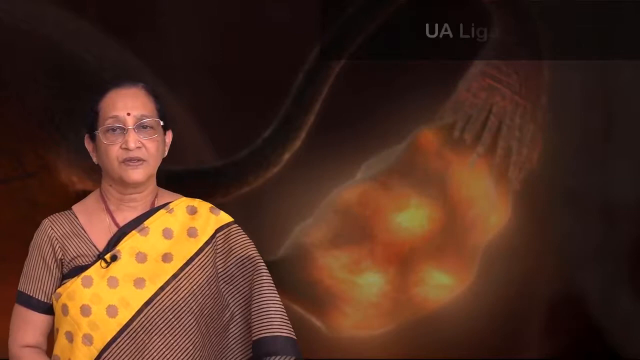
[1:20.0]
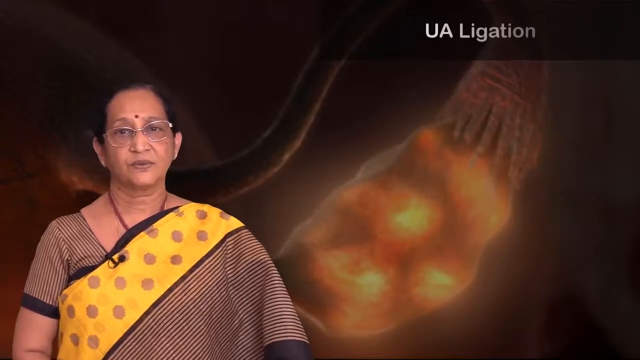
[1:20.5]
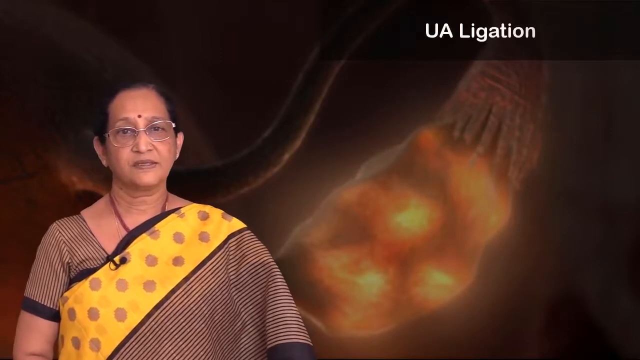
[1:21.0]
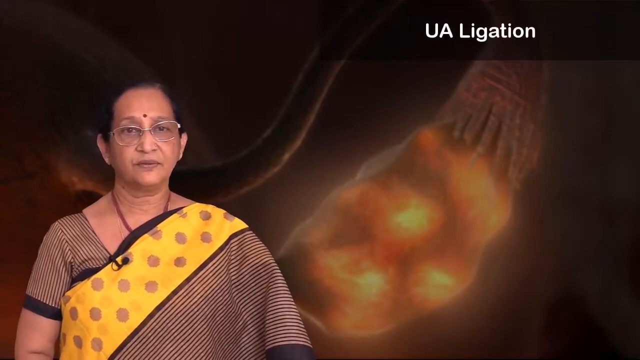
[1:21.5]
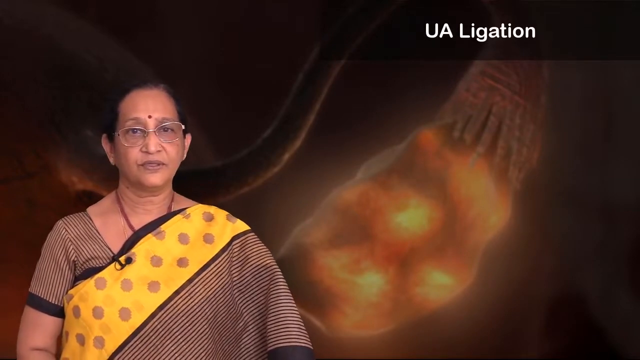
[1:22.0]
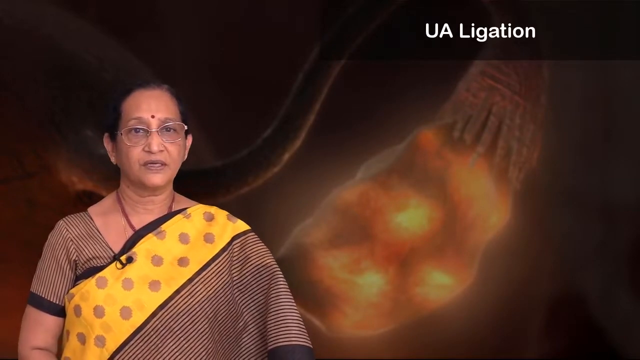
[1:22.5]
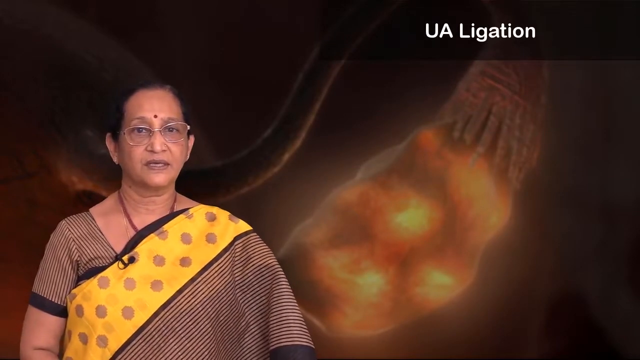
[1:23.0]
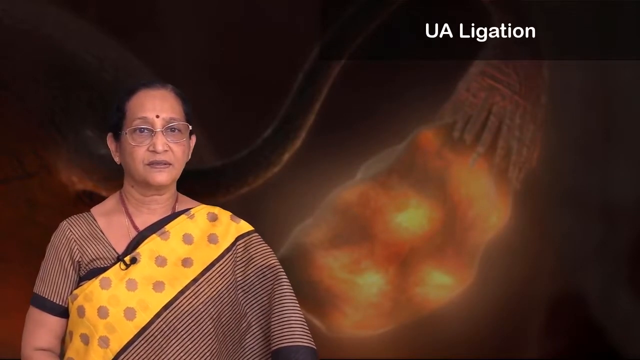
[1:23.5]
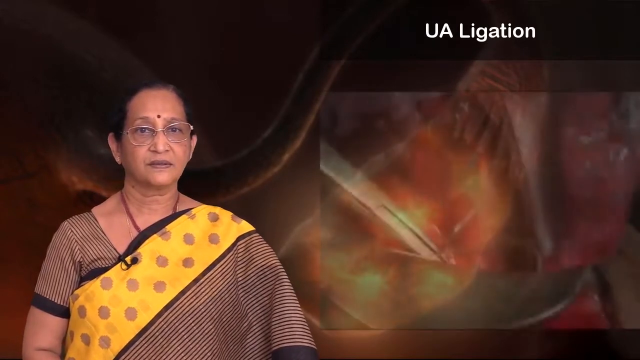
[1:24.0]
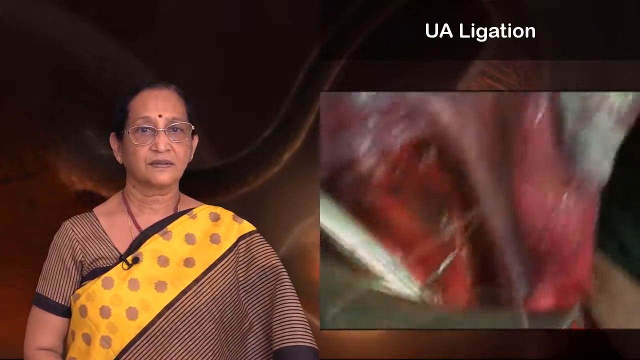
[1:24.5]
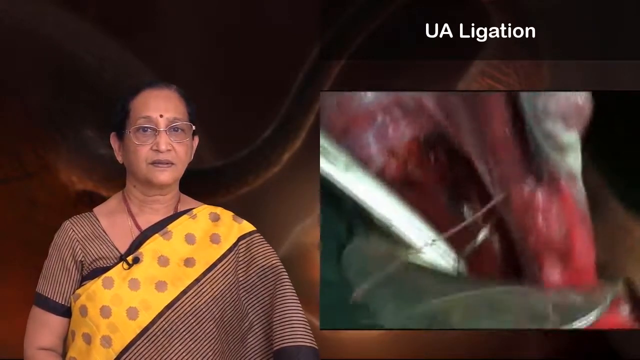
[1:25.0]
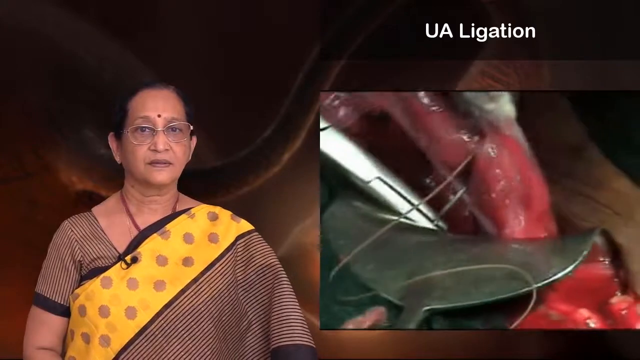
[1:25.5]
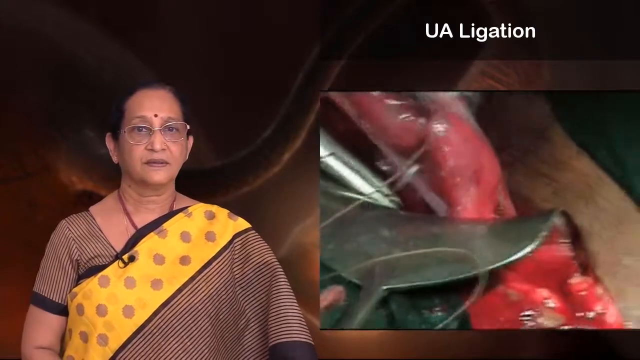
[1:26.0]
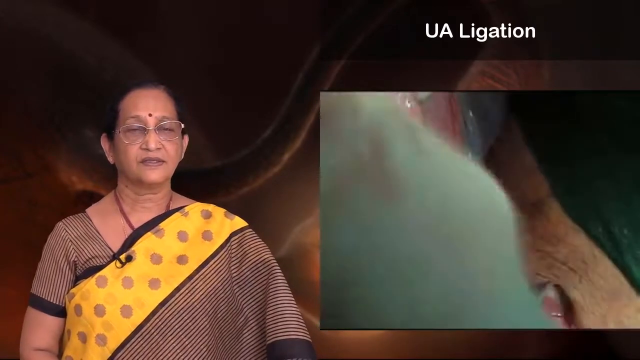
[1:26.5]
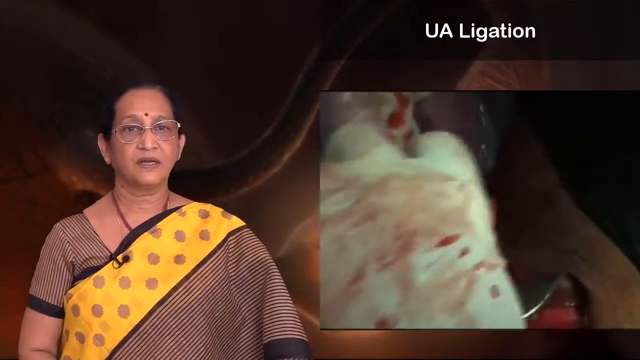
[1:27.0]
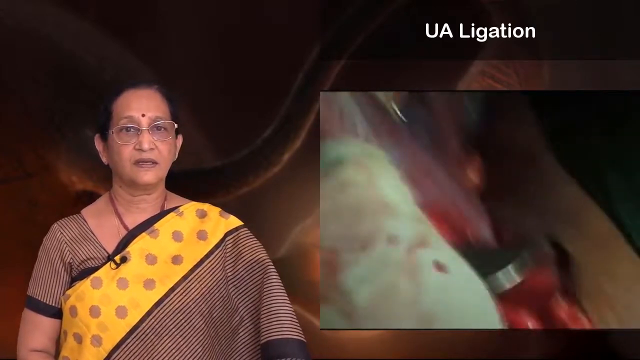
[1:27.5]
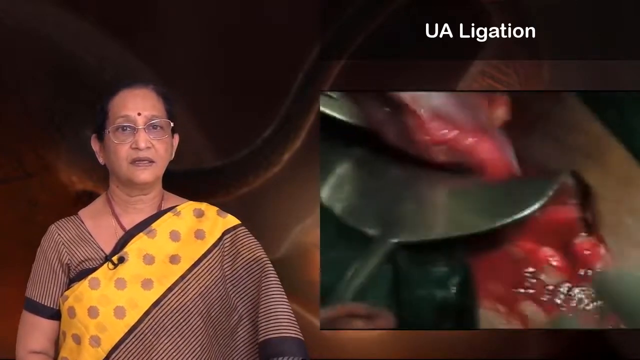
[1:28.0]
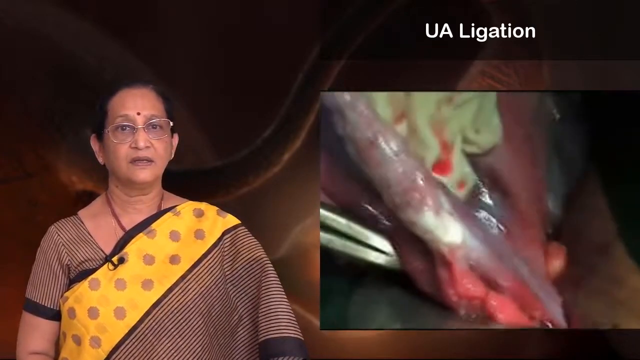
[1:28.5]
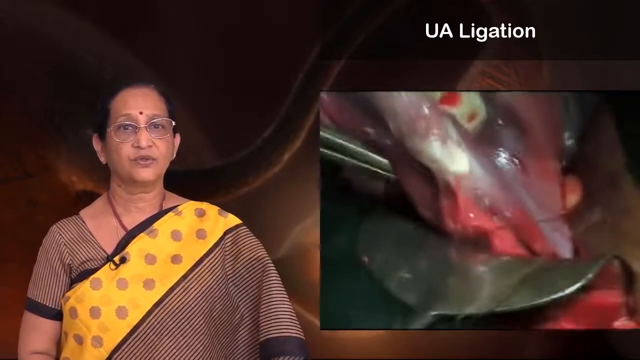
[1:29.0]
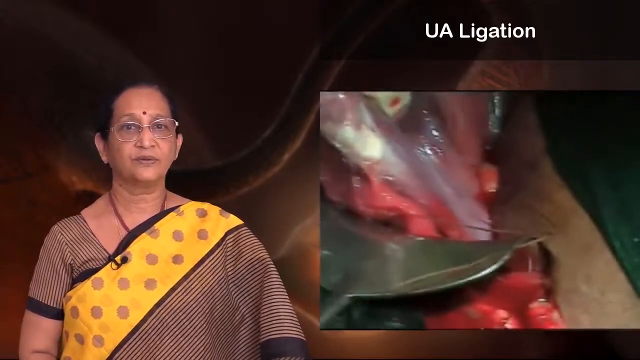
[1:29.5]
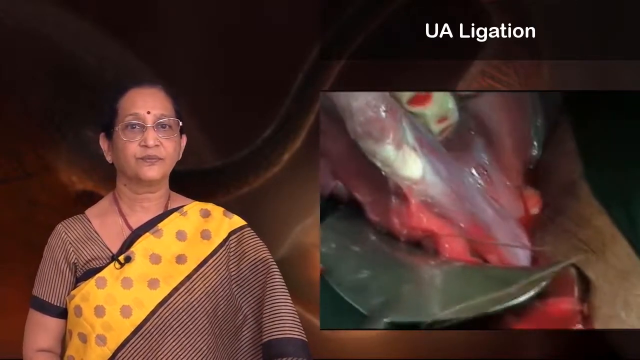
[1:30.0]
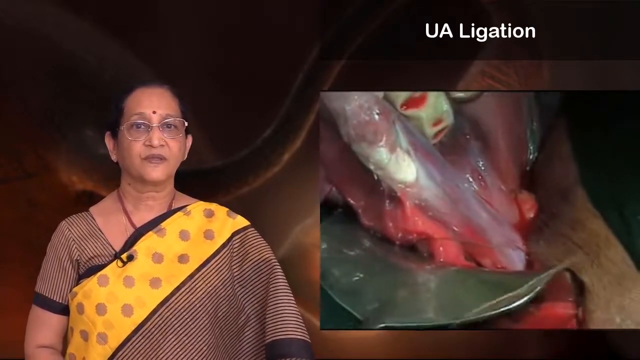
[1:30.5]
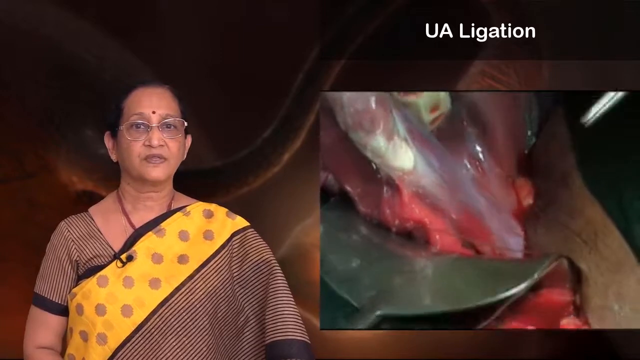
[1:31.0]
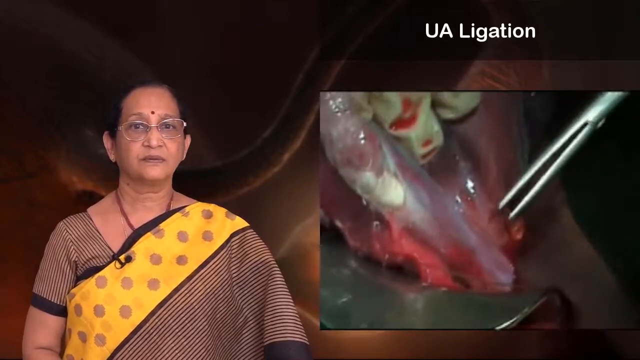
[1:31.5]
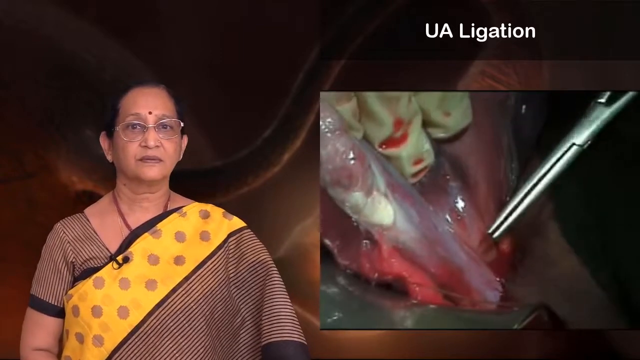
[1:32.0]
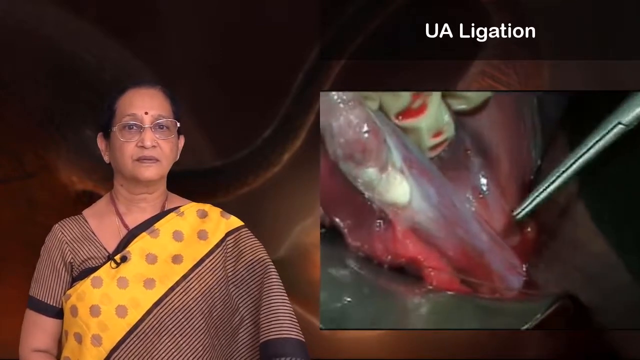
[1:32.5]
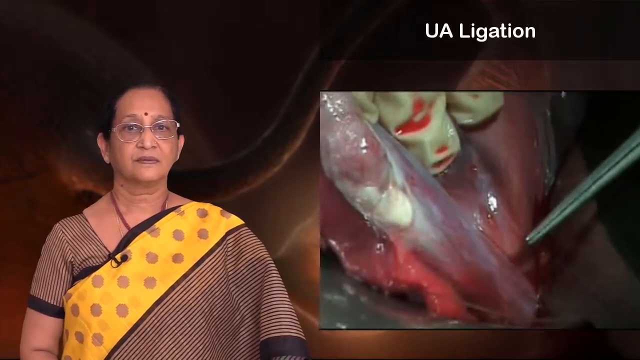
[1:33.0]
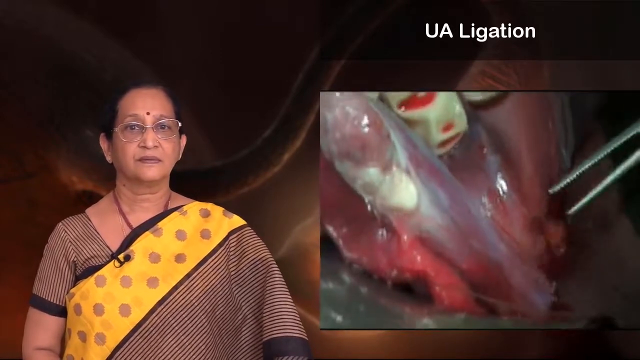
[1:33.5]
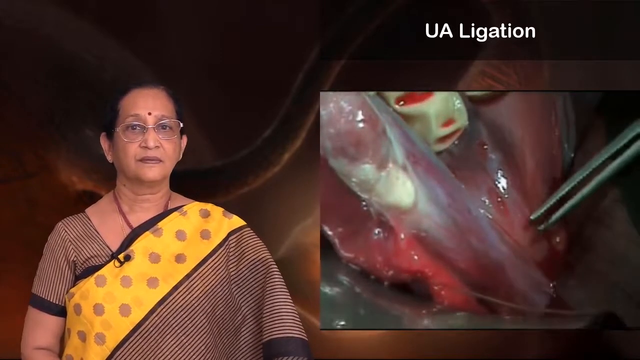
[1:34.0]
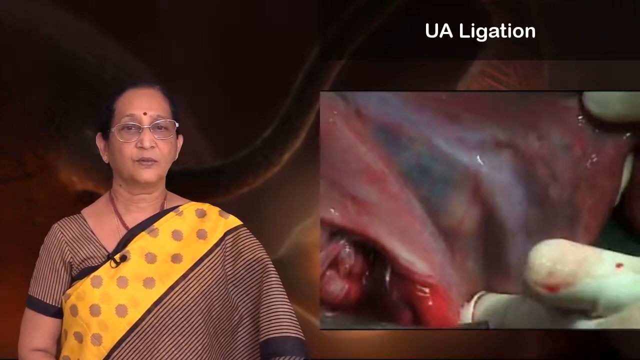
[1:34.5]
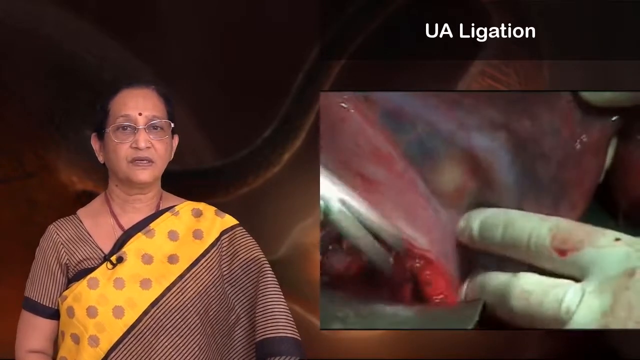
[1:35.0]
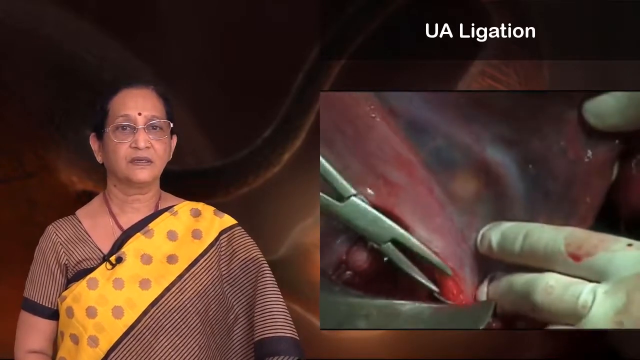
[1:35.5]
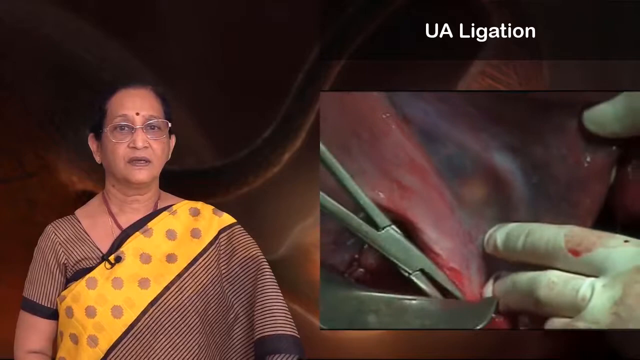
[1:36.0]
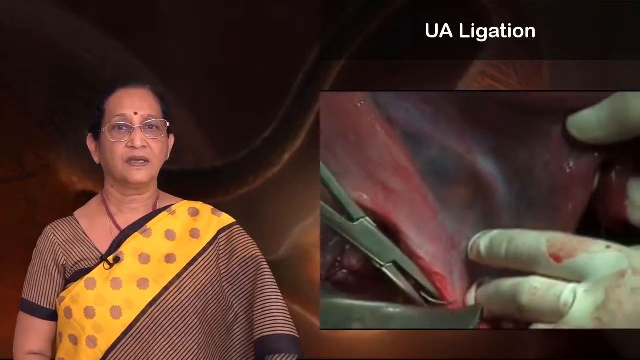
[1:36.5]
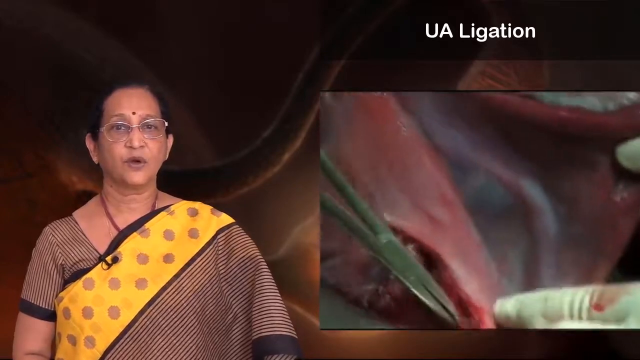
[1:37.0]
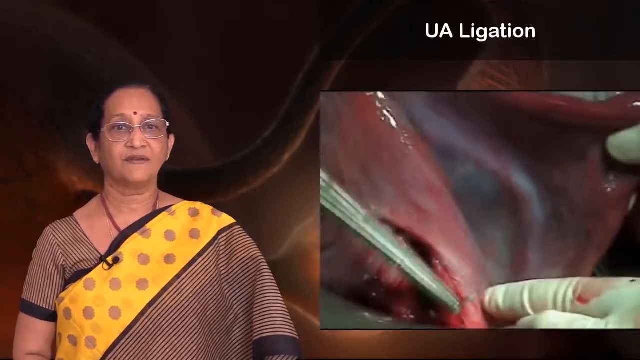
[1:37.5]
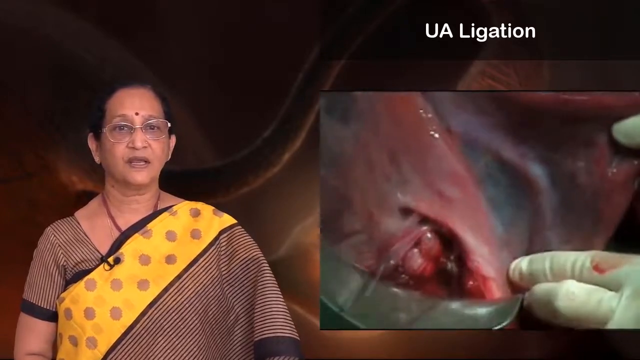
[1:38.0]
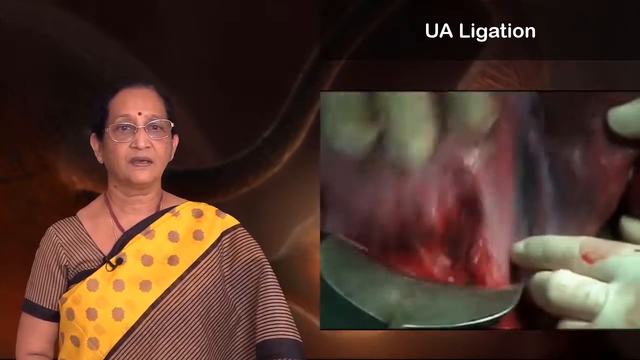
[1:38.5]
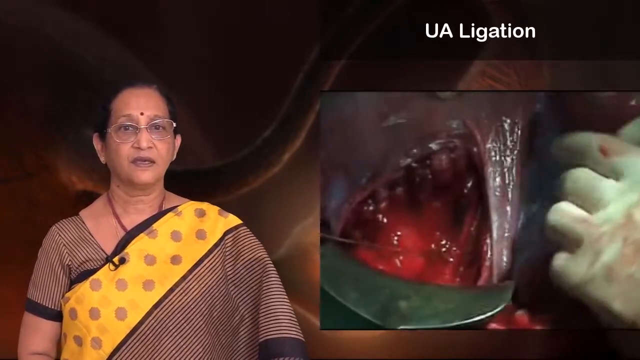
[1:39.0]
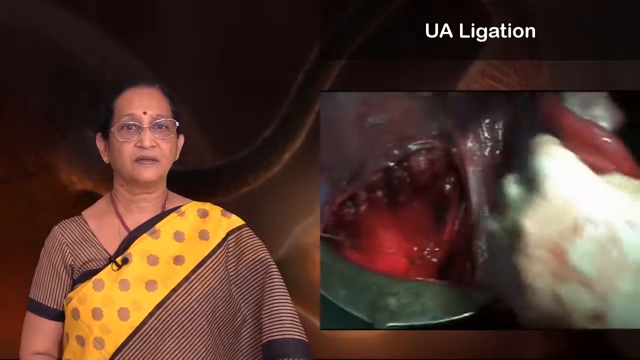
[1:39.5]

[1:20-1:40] The woman remains on the left side of the screen, and the title at the top right is replaced: white text on a plain black rectangle reading "UA Ligation". A square pops up underneath it like a picture-in-picture, showing a very graphic clip of somebody performing the procedure with white gloves and surgical tools. Somebody is sewing inside somebody else, with surgical scissors, grippers and graspers pulling at the meat inside the person. The gloved hands maneuver inside the person, apparently working on the uterus.